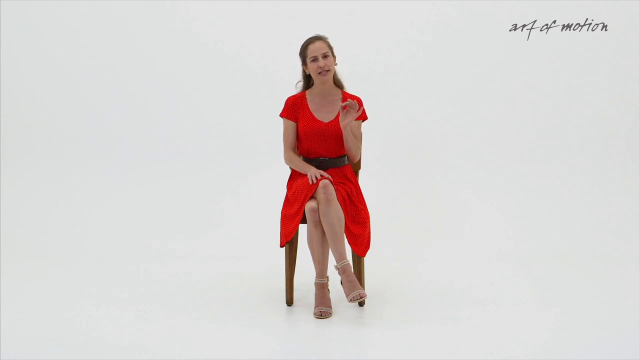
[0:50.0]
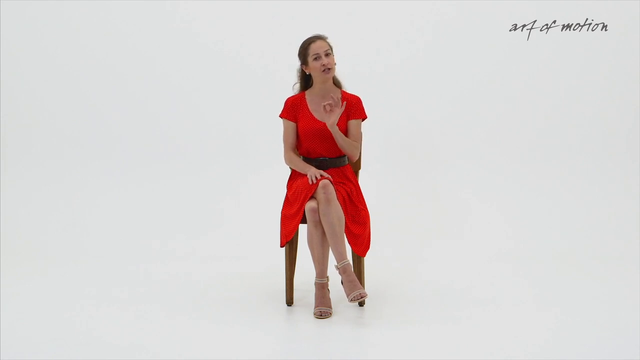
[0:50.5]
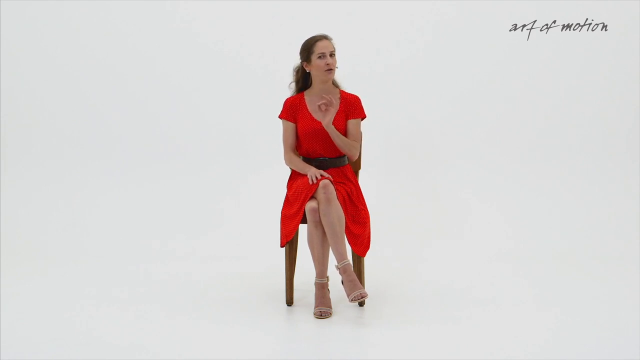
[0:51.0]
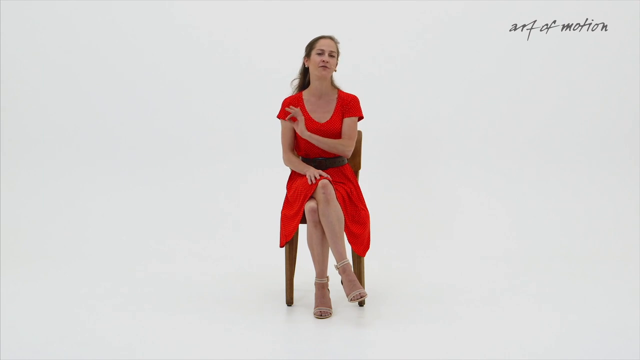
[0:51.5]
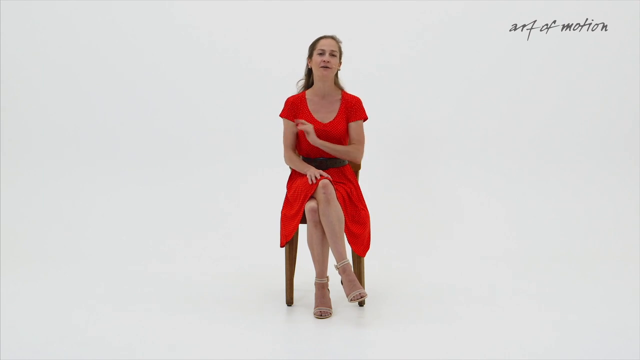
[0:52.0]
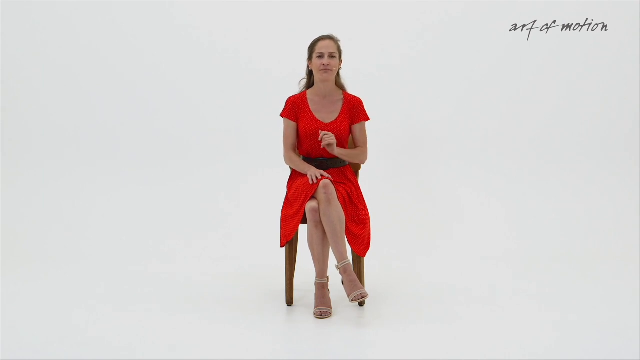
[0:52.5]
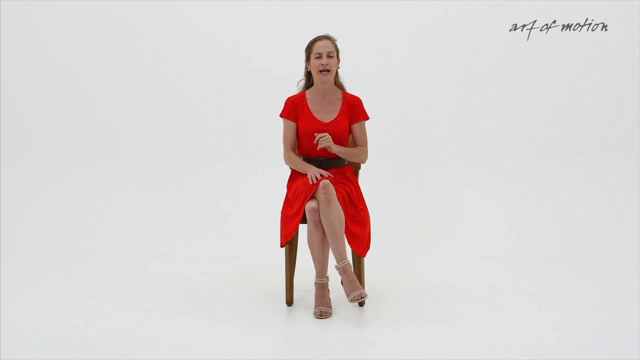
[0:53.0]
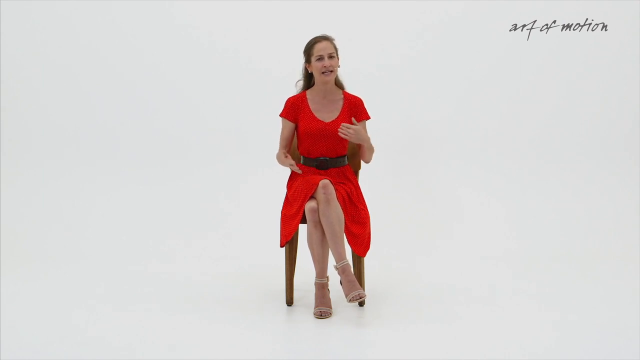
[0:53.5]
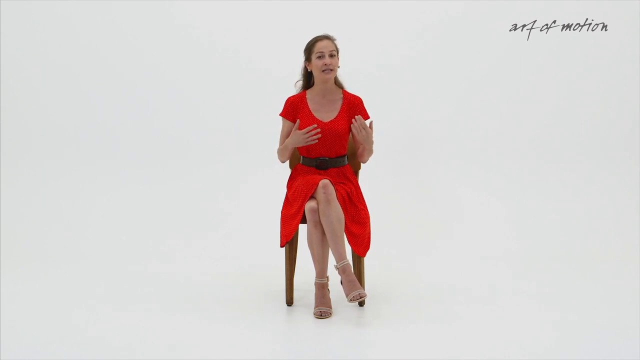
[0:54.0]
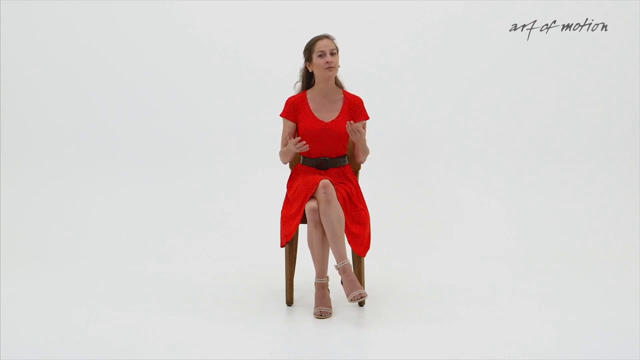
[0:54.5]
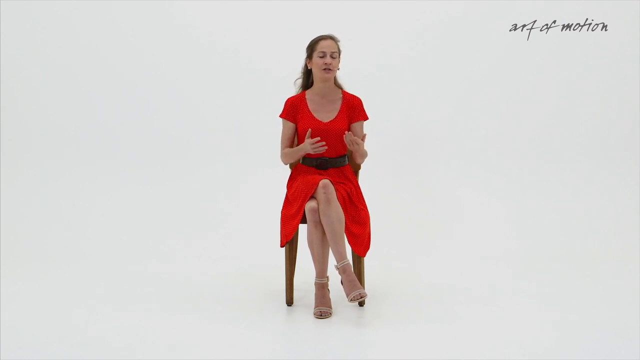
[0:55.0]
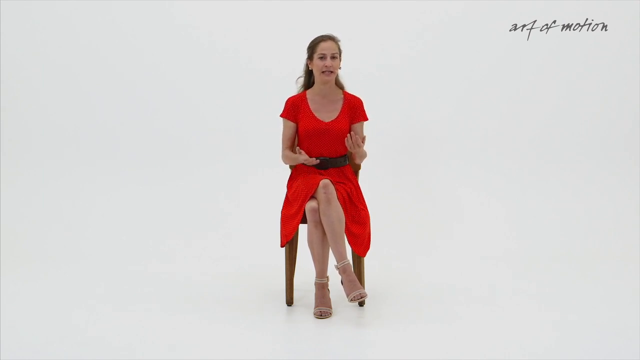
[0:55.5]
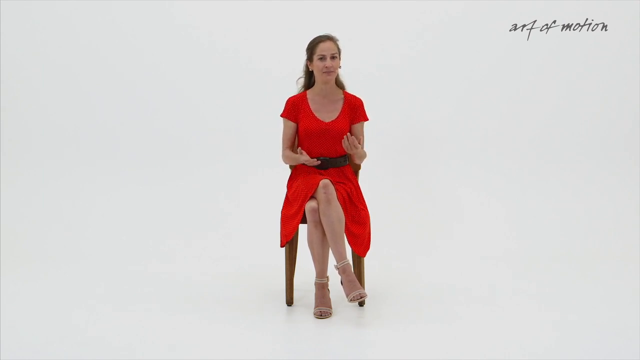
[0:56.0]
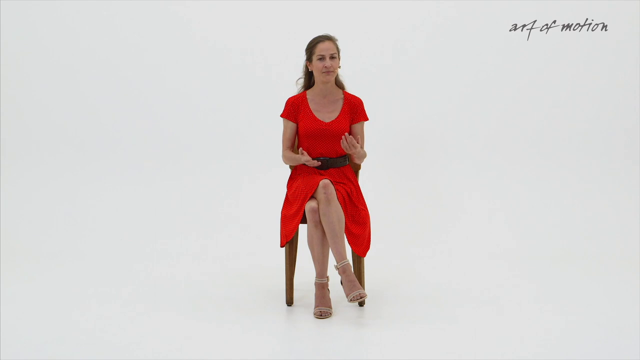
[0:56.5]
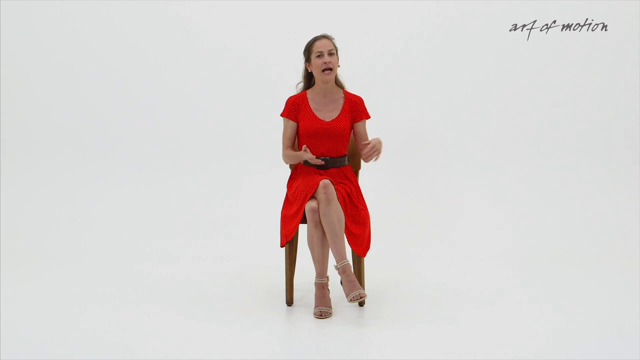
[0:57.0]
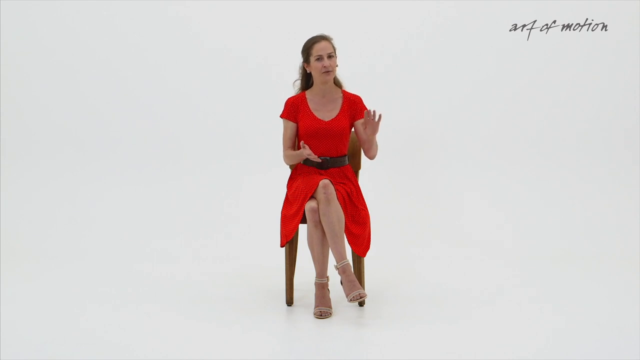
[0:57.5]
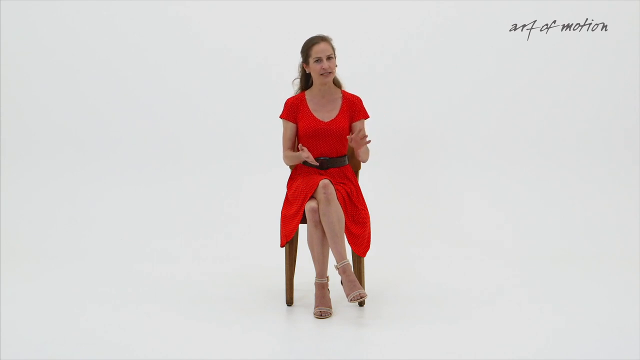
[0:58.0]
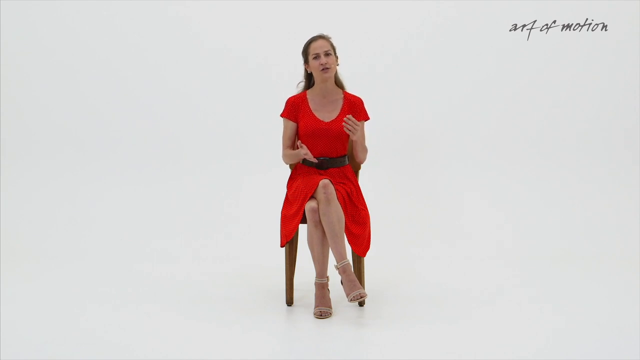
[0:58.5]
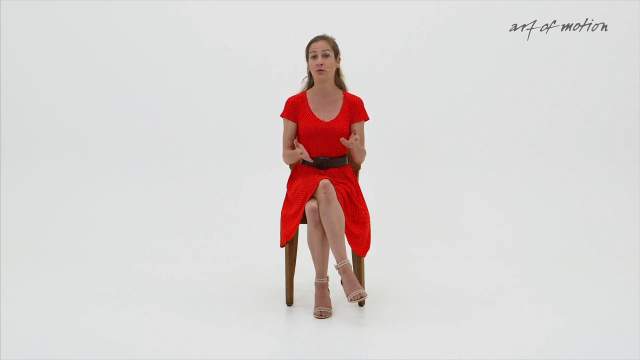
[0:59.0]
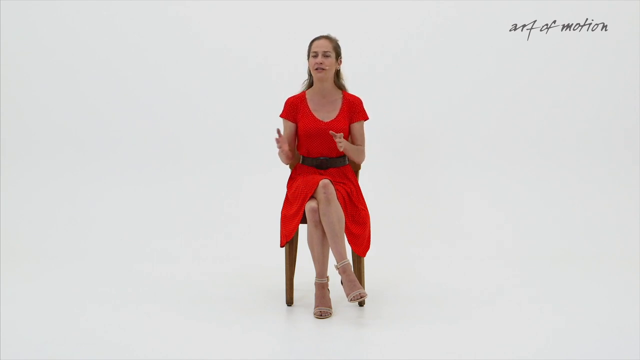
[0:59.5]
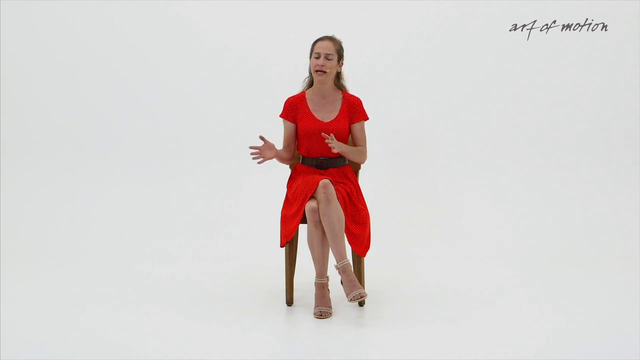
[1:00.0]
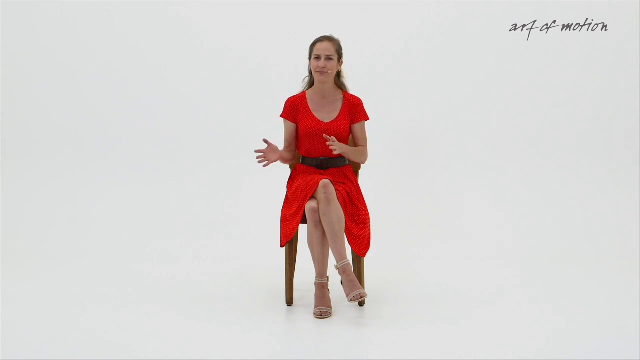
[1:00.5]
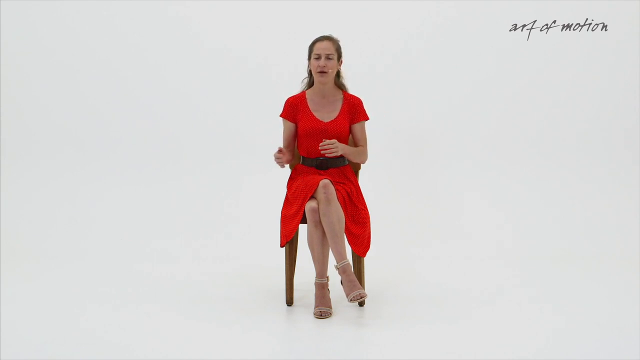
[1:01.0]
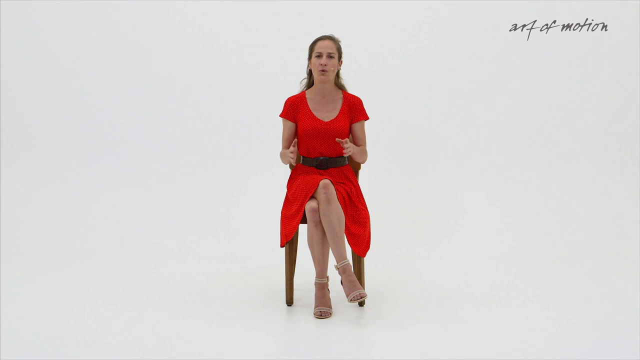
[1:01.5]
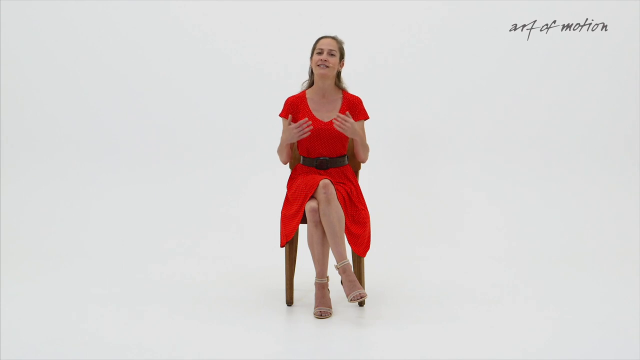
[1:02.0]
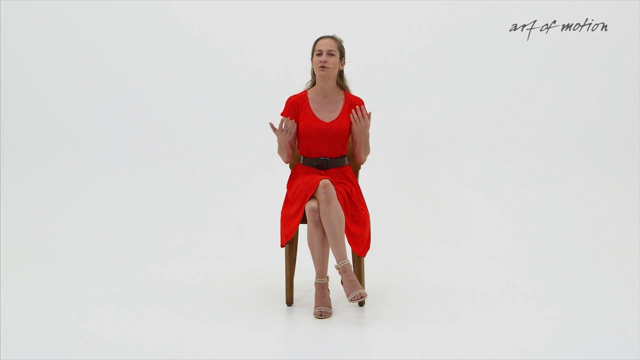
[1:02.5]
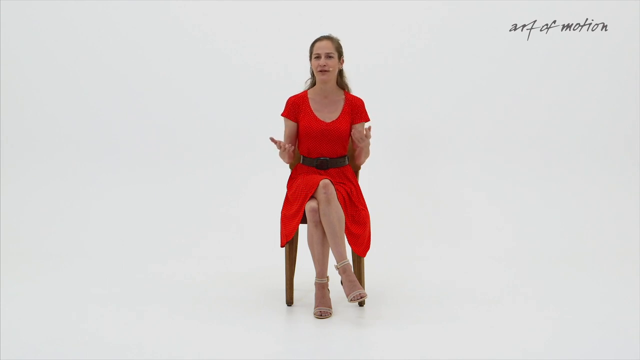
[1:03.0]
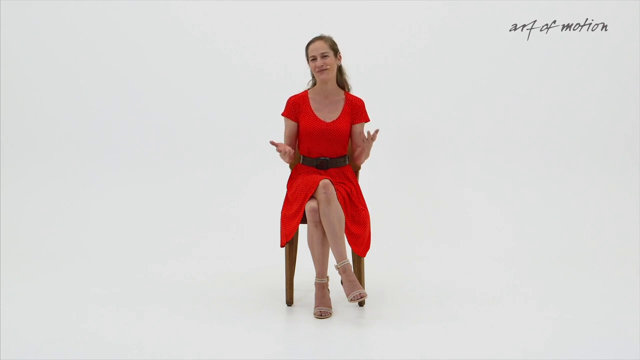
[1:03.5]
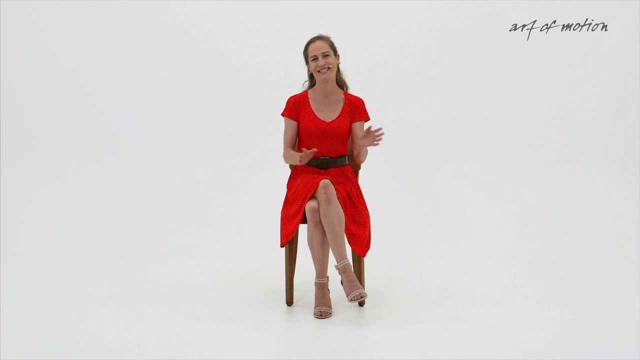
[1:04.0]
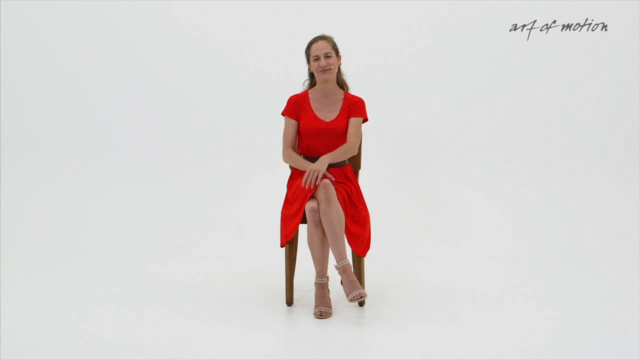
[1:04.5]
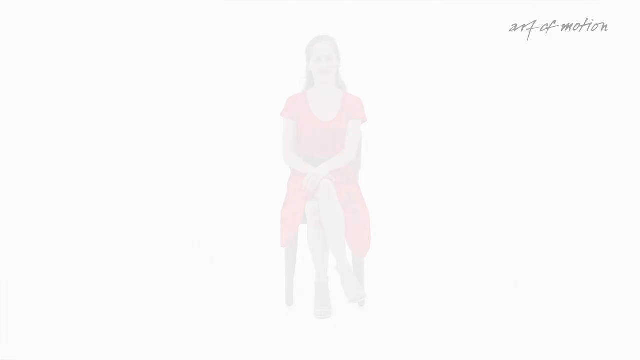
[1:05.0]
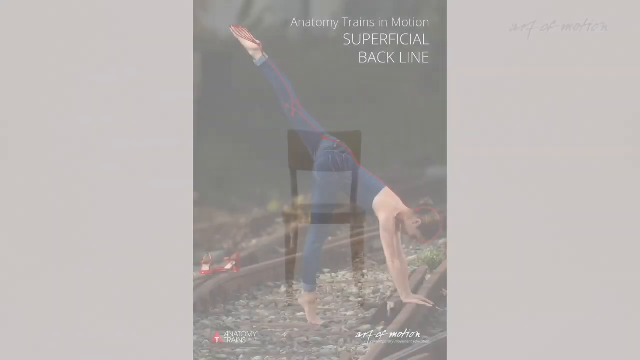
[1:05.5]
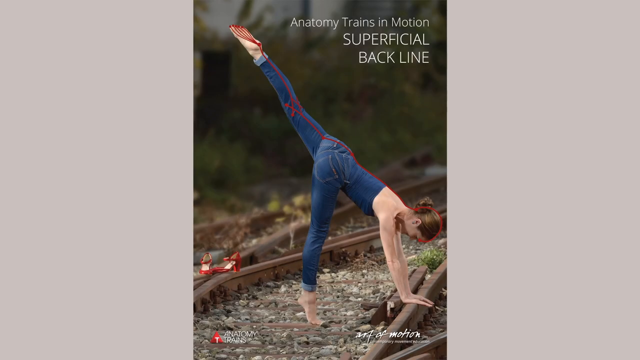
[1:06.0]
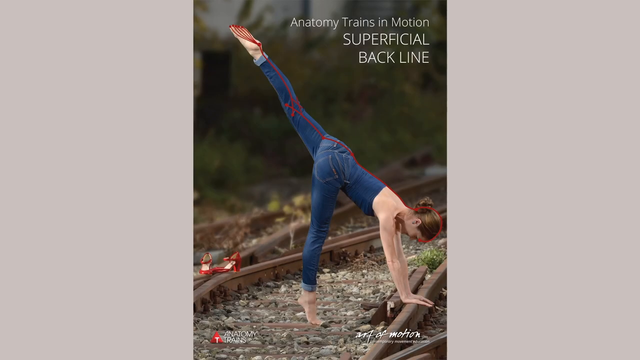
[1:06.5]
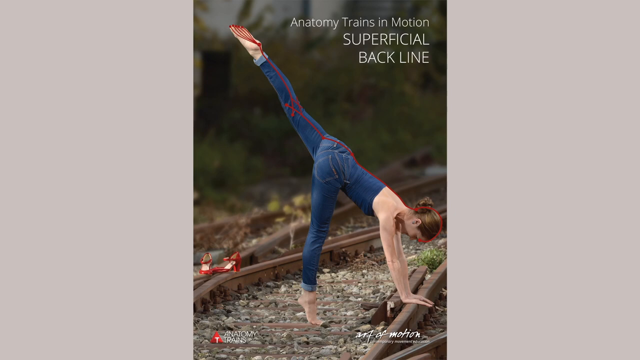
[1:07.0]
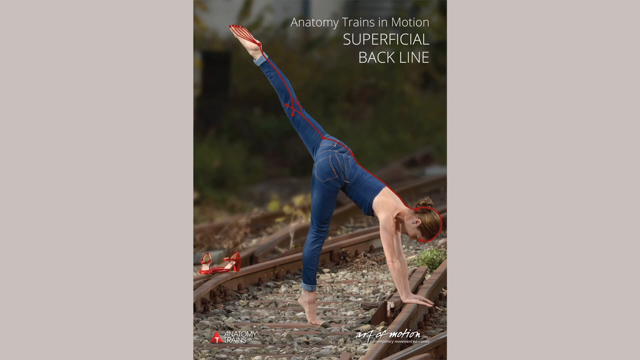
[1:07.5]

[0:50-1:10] The woman in the red dress gestures with her left hand at her side, a little above chest level and a little below shoulder level. The wide black belt she wears as an accessory to her bright red dress is clearly visible. As she speaks, she holds her left pointing finger and thumb together as if holding a delicate feather and moves the hand smoothly across her chest from her left side to her right side, kind of emphasizing each point, then back to the bottom of the open neck of her dress. She then flattens the hand, almost in the shape of a karate hand, as she moves it further back to her left side. Meanwhile her right hand lifts off her lap, open with the palm facing her, and both hands gesture together with open palms before coming back to rest on her lap. The video then dissolves to a still shot of a woman in tight blue jeans on a railroad track, about to do some type of somersault that looks like it is coming from a yoga pose. Writing in the upper right-hand corner reads "anatomy trains in motion, superficial back line". A red line traces the woman's back from her head up to her leg, which is raised in the air. Her torso is down with her hands on the railroad track, her right toe is on the ground, and her left leg is up in the air, as if she is about to do a somersault or cartwheel; her head is closest to the ground. The setting looks like an abandoned, rusted railroad switching track, with blurry shrubbery in the background and the rails and rail bed in the foreground.